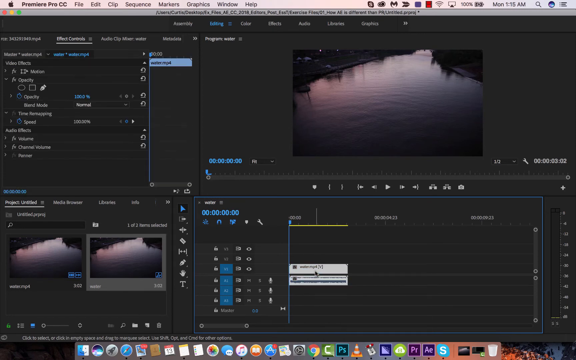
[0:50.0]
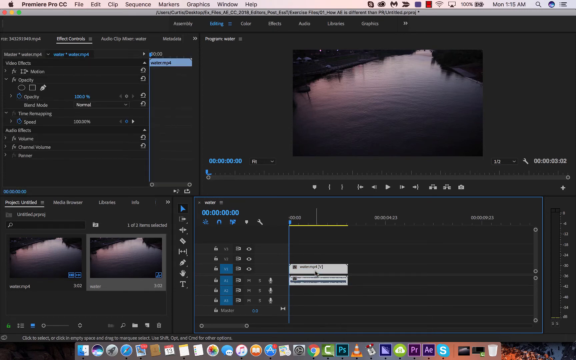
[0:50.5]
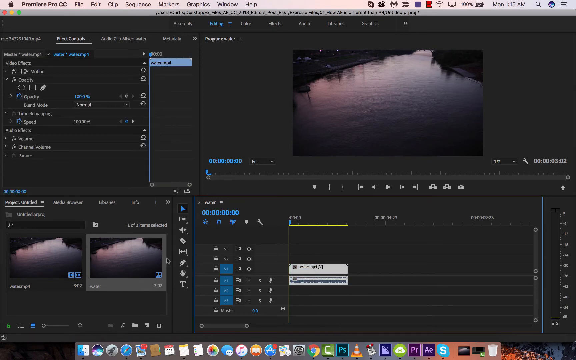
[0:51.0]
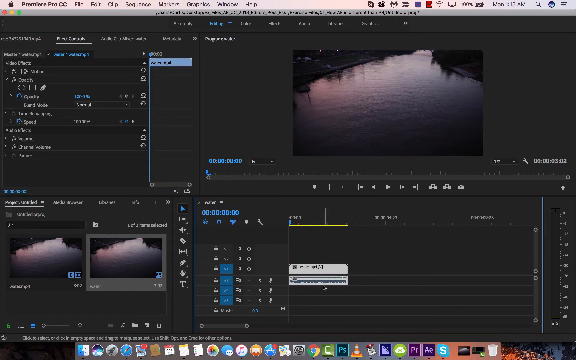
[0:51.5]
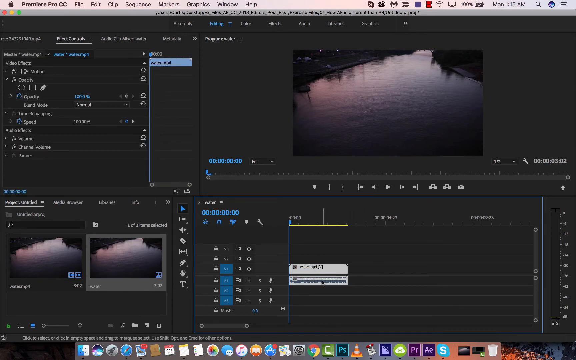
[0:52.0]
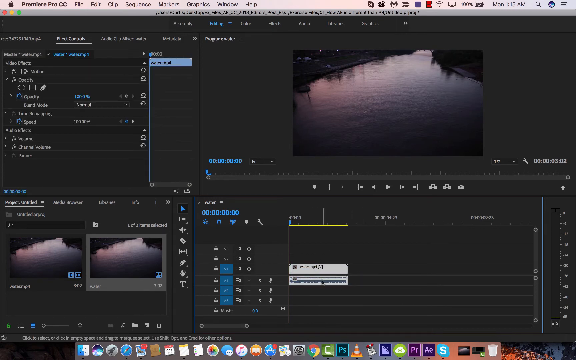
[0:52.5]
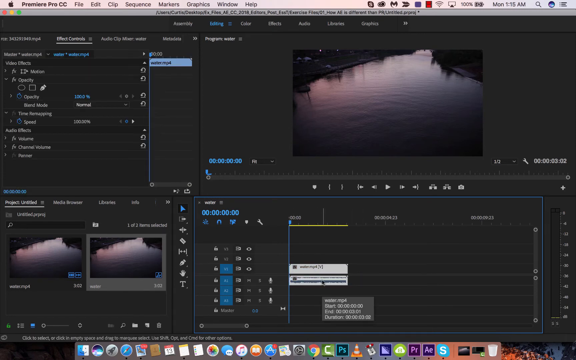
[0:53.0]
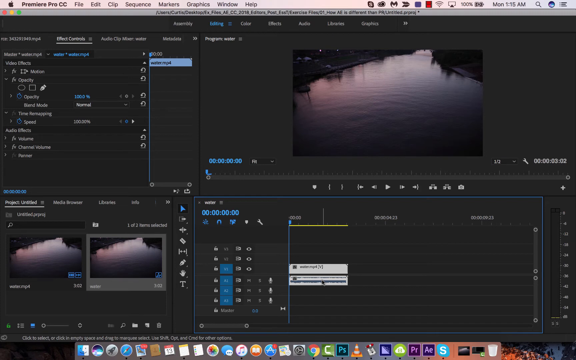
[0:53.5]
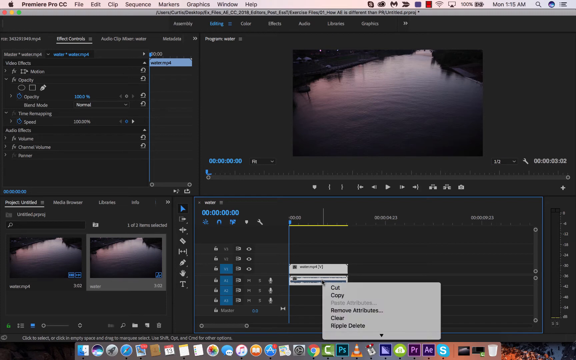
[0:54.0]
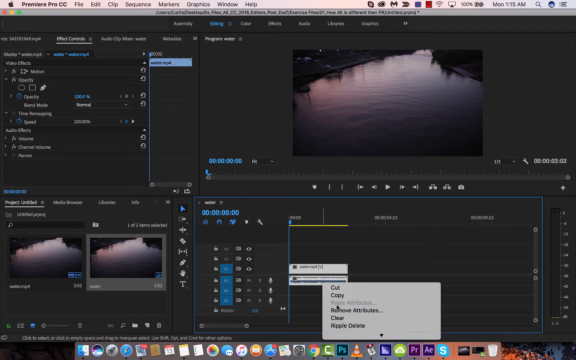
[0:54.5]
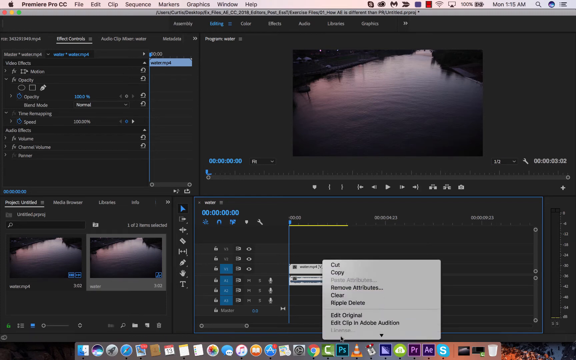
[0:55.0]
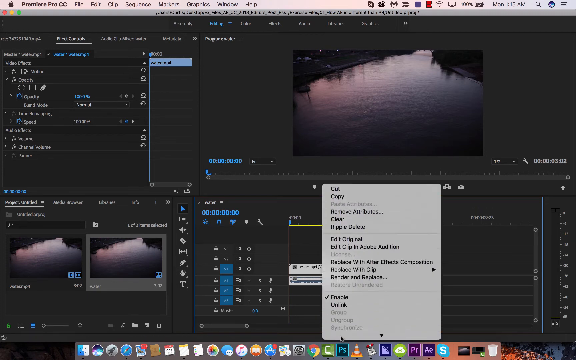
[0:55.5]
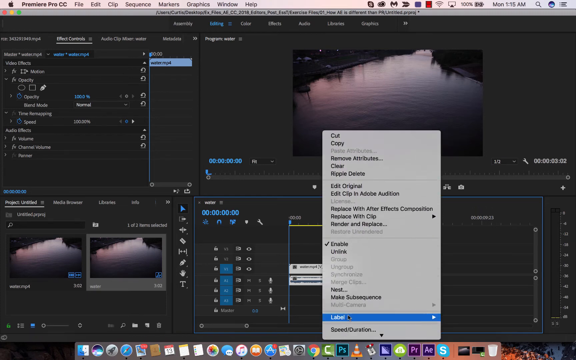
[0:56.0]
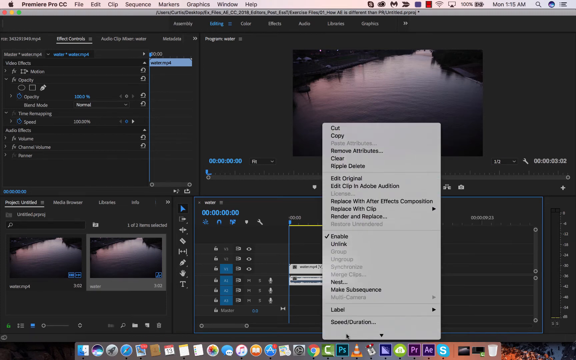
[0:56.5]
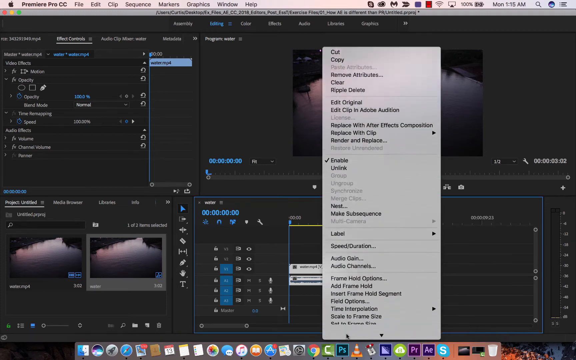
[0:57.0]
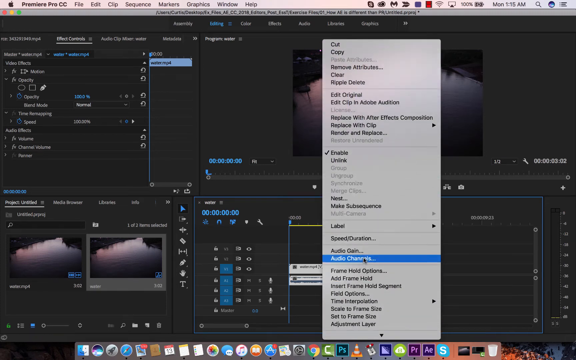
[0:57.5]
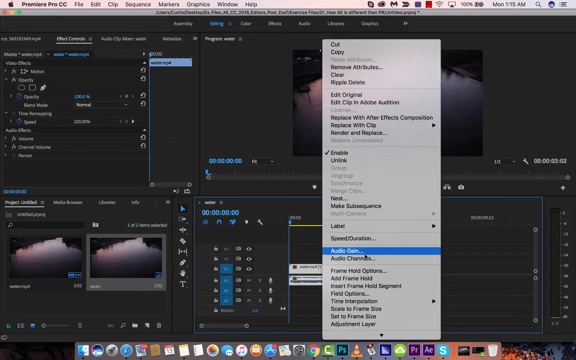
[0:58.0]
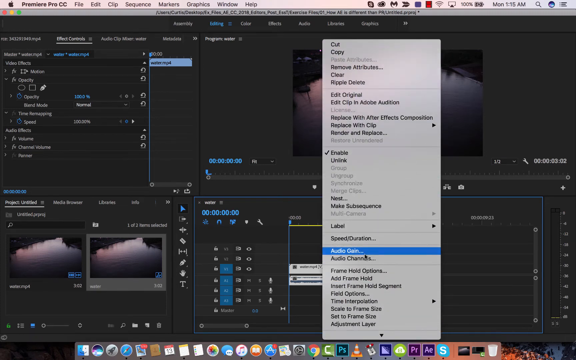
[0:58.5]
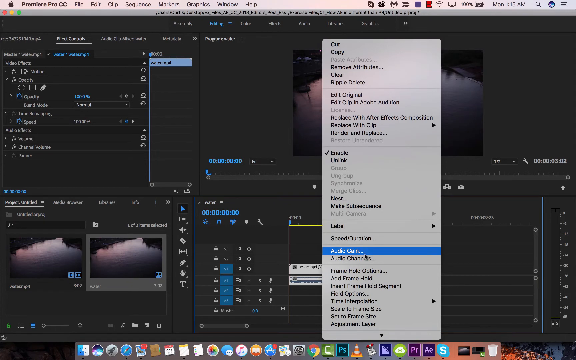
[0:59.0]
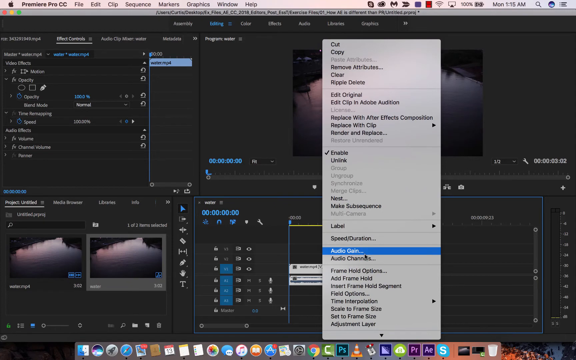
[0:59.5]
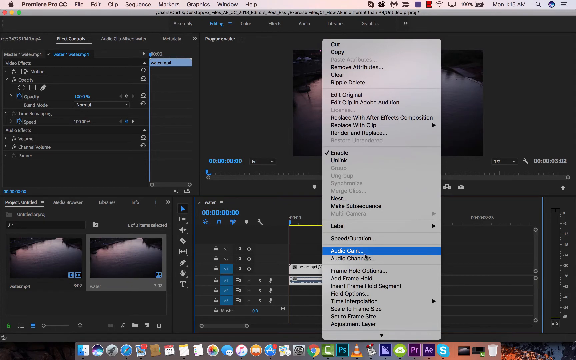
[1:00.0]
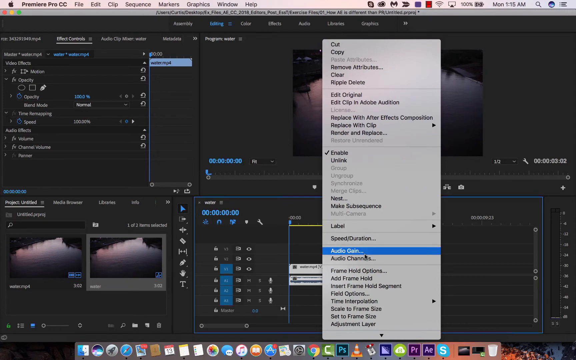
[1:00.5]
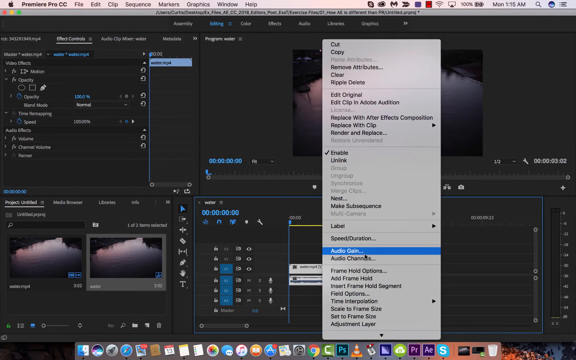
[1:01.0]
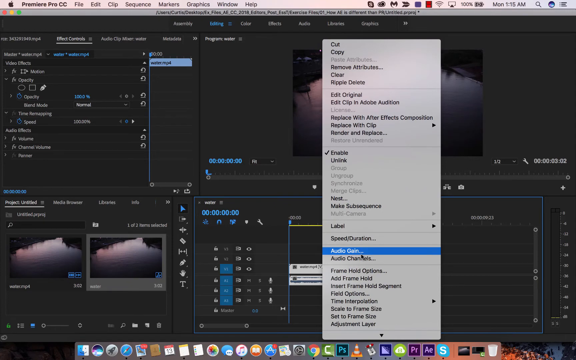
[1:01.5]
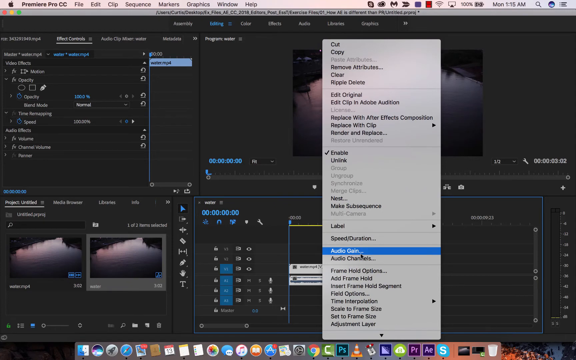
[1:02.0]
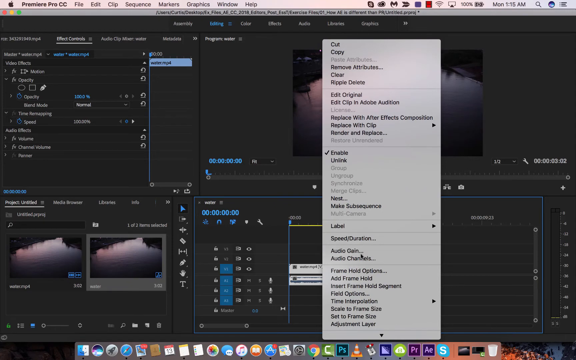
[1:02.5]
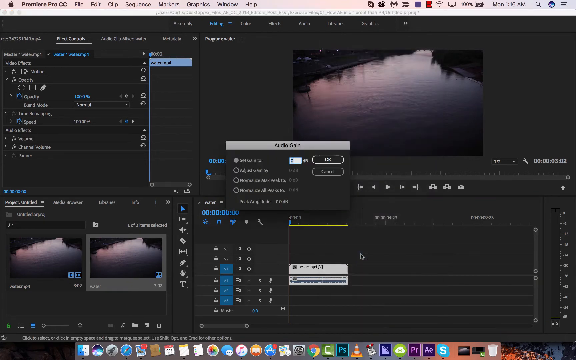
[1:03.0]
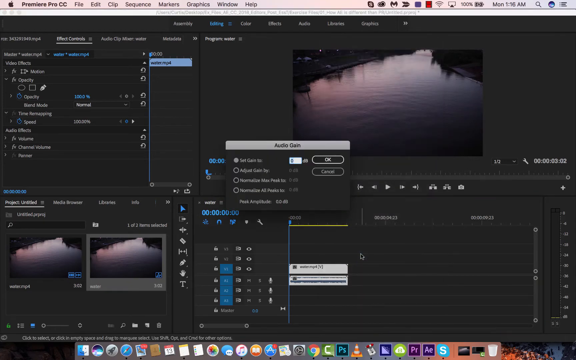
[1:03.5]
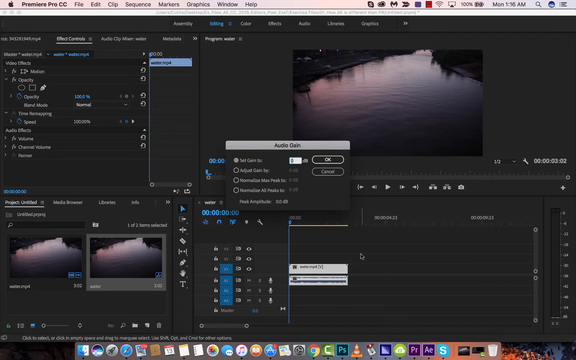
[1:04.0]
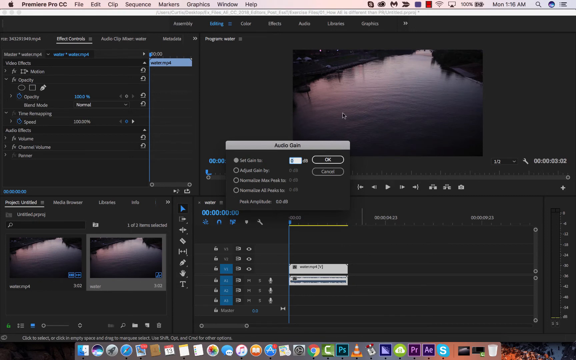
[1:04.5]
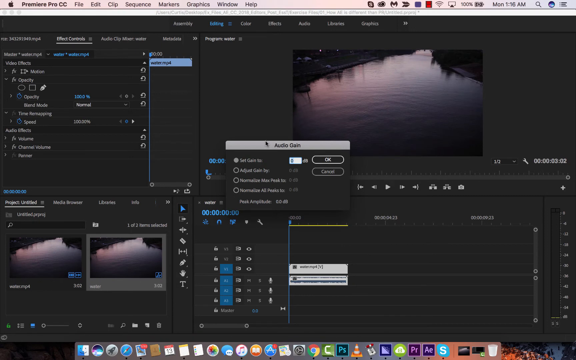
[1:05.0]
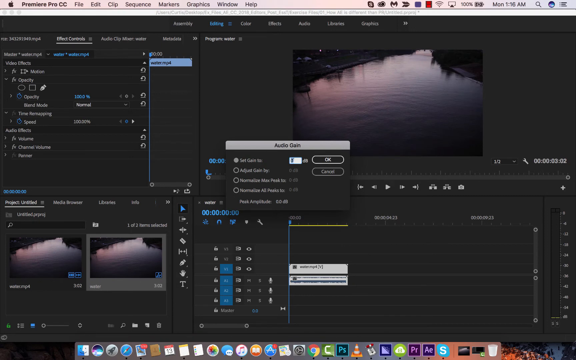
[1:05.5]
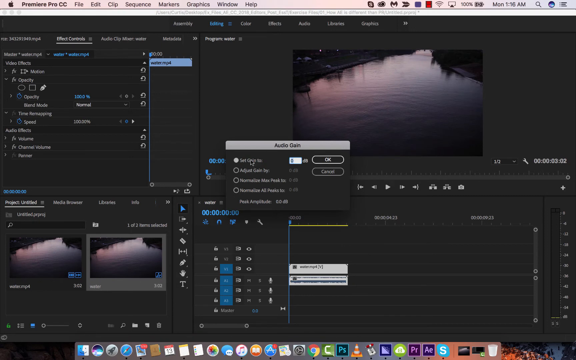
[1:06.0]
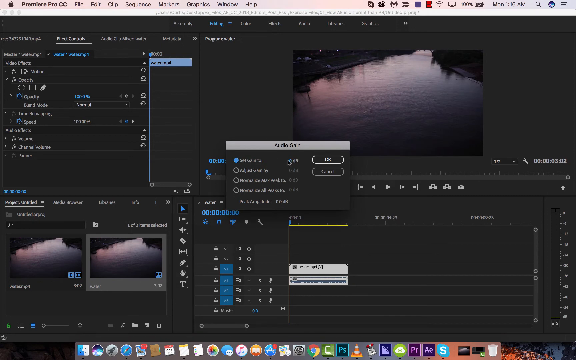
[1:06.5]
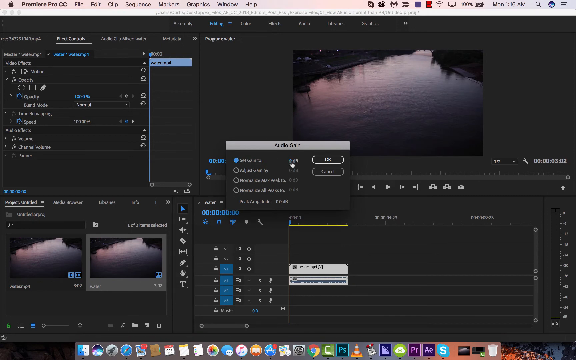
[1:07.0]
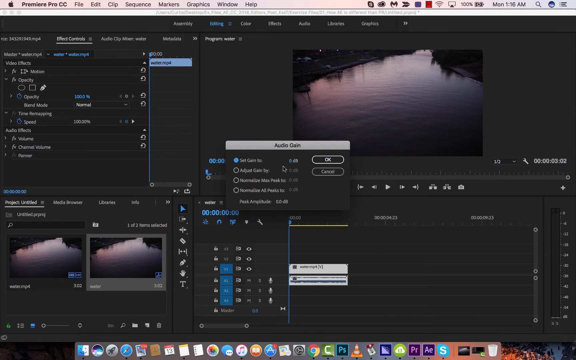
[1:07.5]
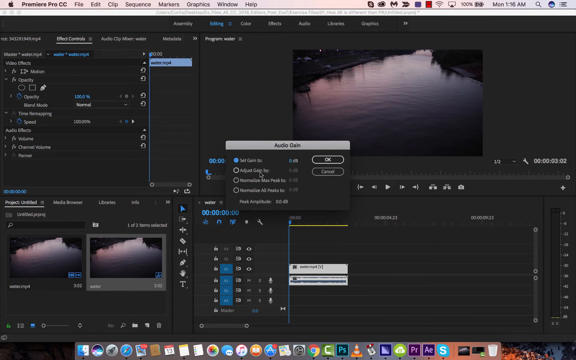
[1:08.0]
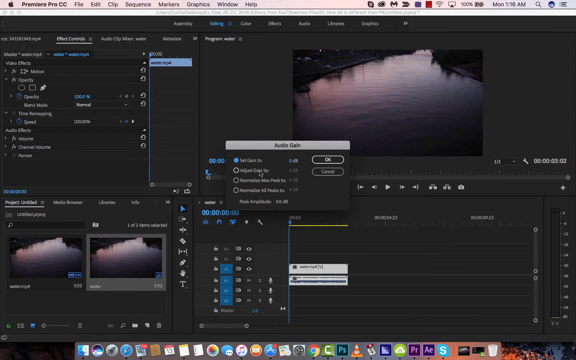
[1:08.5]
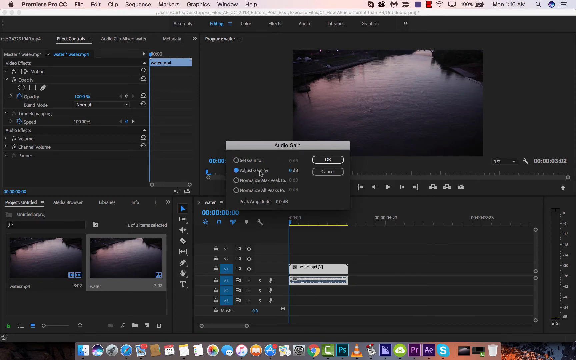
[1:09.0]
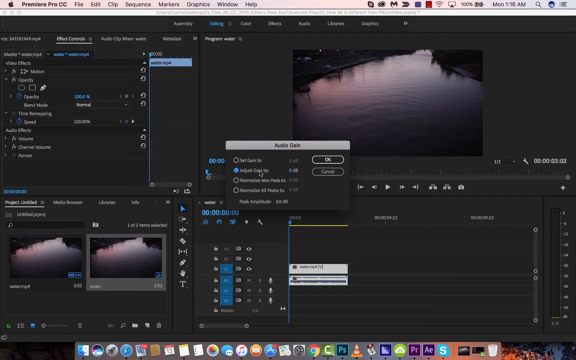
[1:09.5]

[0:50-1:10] The frame is a little wider than it is tall and shows someone's macOS desktop, with the Apple icon in the upper left and the text "Premiere Pro CC" after it. Next are the menus File, Edit, Clip, Sequence, Markers, Graphics, Windows and Help, followed on the right by icons showing what is open. In the main program there appears to be some navigation in the upper-left corner, and to the right of it is a very dark picture of a lake, possibly a river since it is narrow. The water has a pinkish purple, sunrise- or sunset-like color in the upper left and gets dark toward the lower right. The lower left holds two repeat copies of the lake for other editing purposes. The person clicks a menu at the bottom center, bringing up a menu with Cut, Copy and other options below; it is long, maybe about 20 to 30 items. The cursor moves over the Audio Gain option, and after it is clicked a menu comes up.